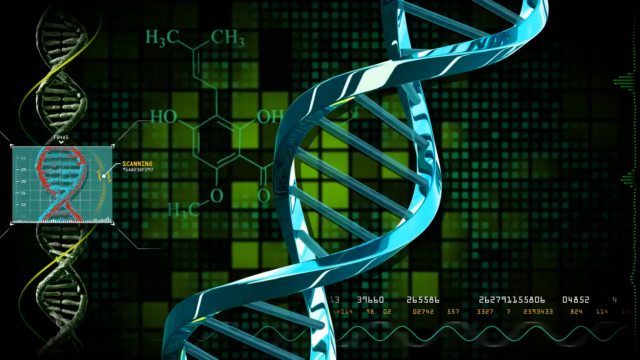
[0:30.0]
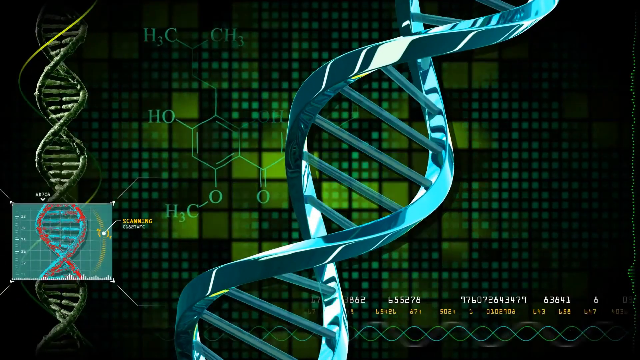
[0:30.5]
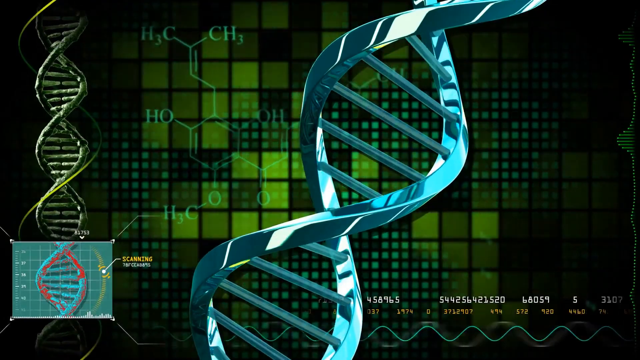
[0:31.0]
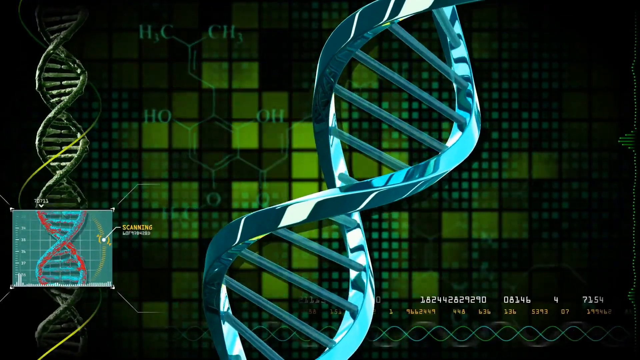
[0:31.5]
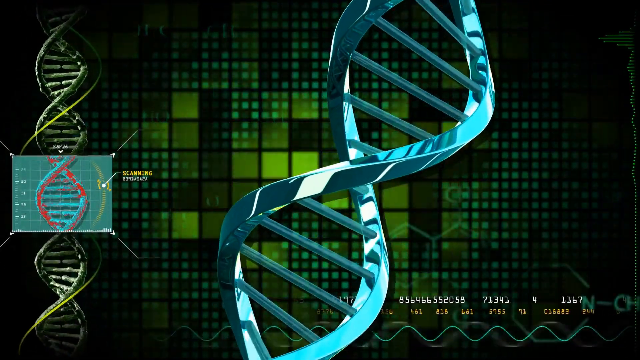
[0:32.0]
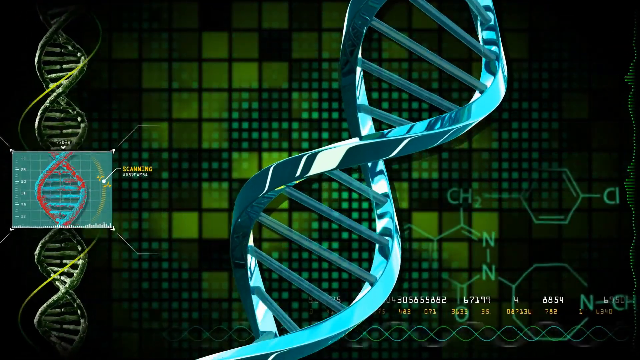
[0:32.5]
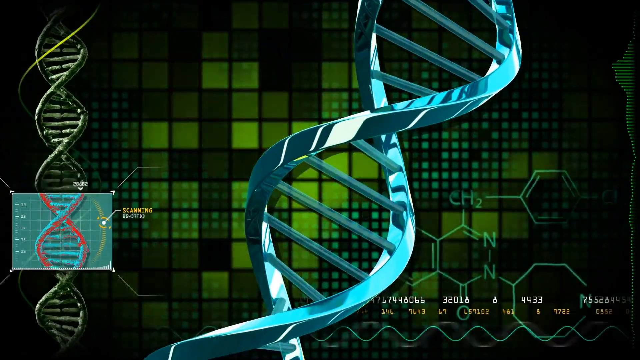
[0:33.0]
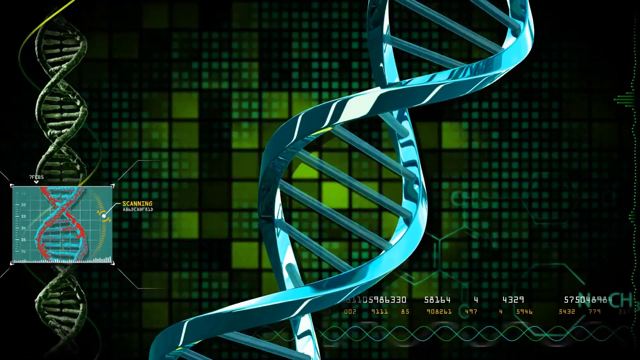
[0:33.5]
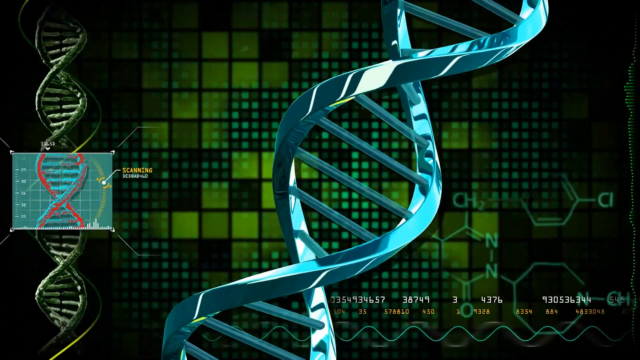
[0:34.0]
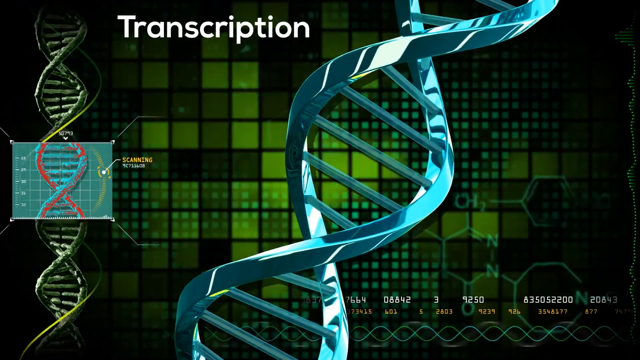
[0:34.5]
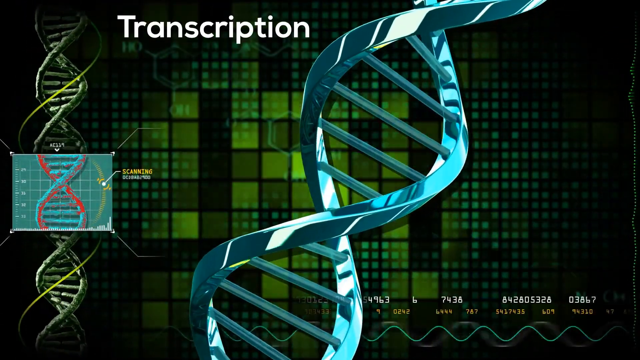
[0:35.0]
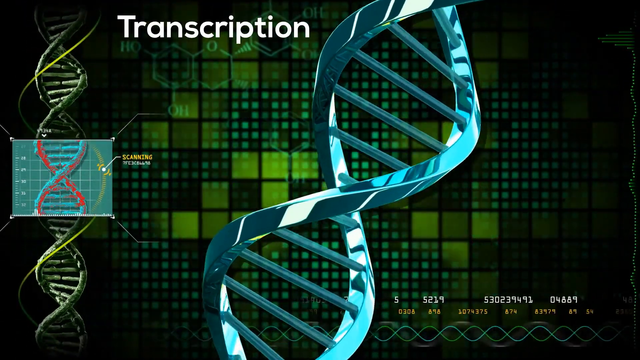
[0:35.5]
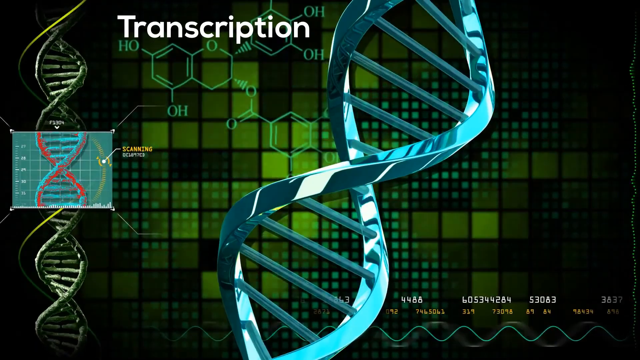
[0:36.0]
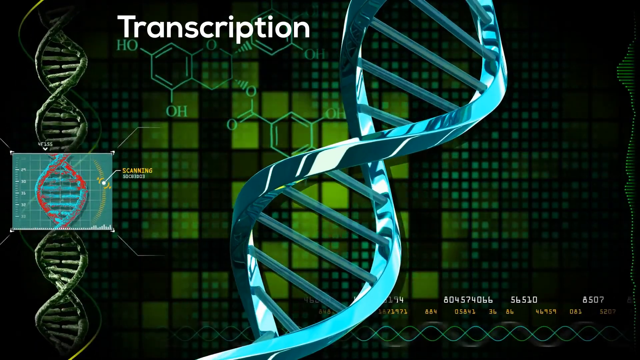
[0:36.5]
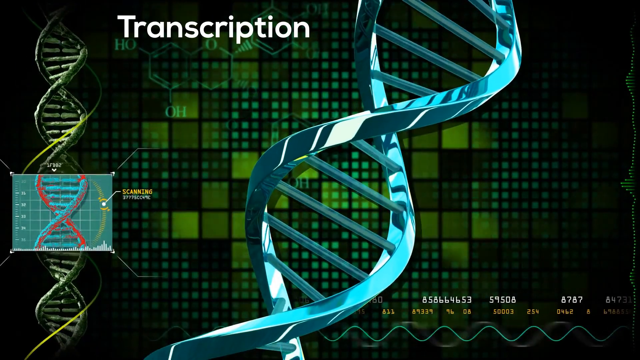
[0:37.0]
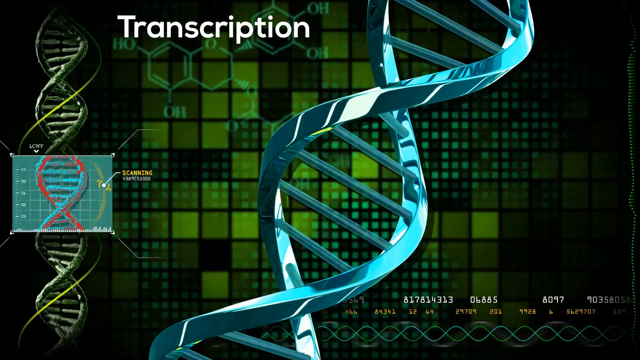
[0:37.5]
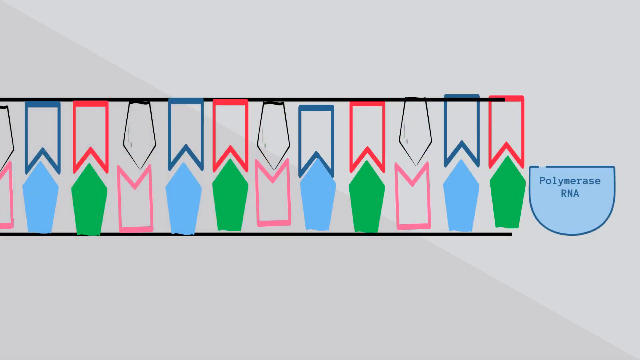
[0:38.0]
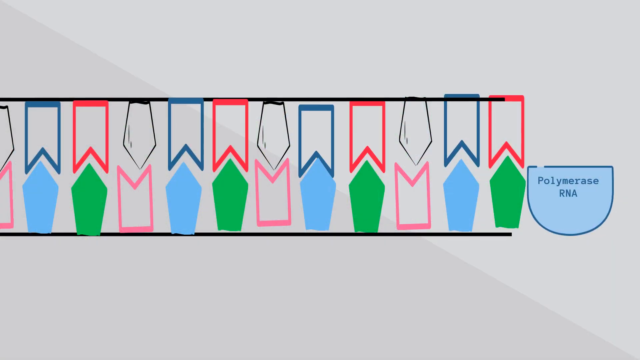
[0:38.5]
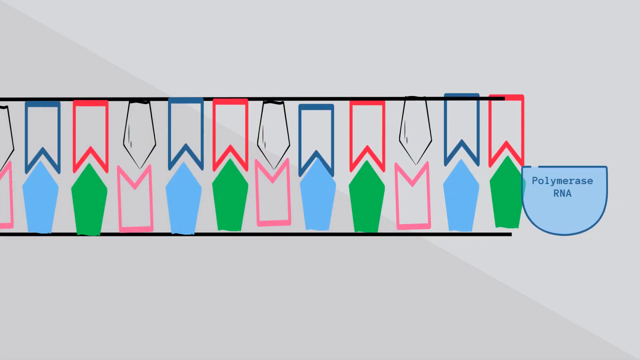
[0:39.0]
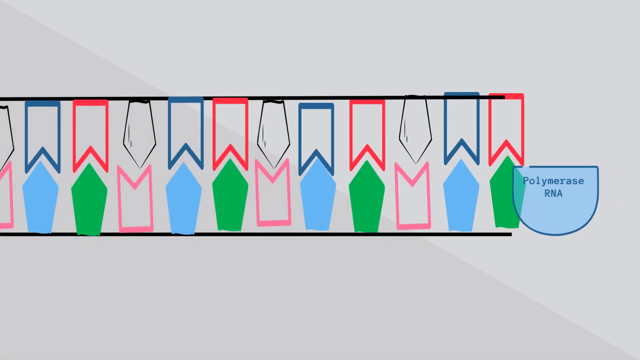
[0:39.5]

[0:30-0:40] A close-up of a 3D animation of a DNA double helix shows the ladder, the connections between the amino acids. The background is made of green squares that light up, and a chemical skeletal formula in the background fades depending on the sequence. On the left side is a long double helix with a portion of it captured in blue. The word "transcription" appears at the top. The next scene is a simple representation of how transcription works: a polymerase RNA molecule is at the bottom right, and a strand is split in two, with each strand carrying particular shapes that fit exactly with the shapes on the top. The polymerase RNA molecule is at the bottom part of the strand and moves through that area.